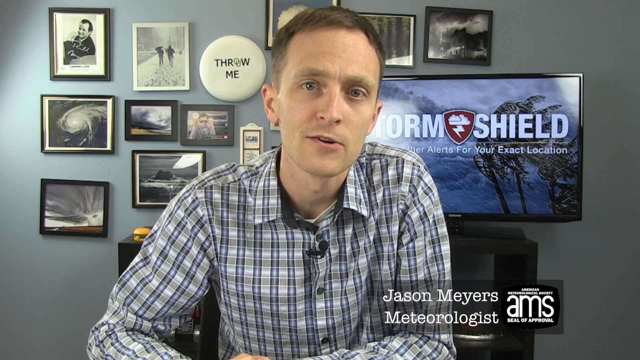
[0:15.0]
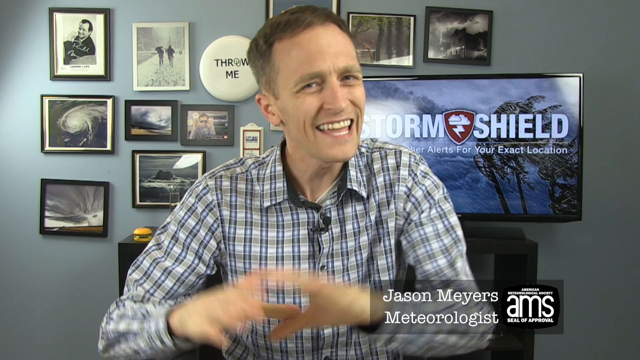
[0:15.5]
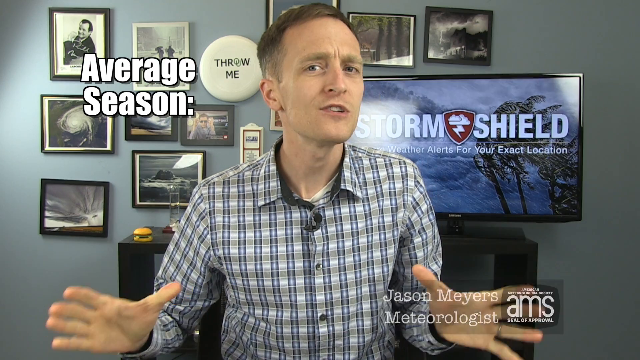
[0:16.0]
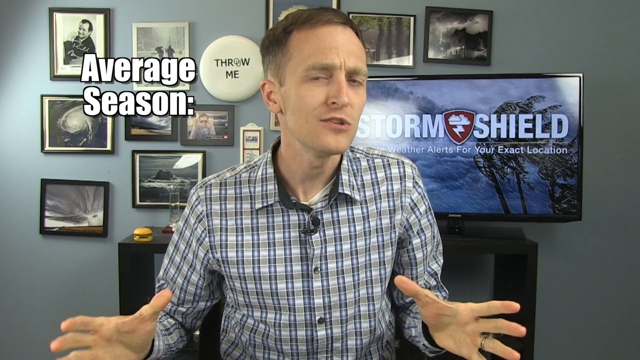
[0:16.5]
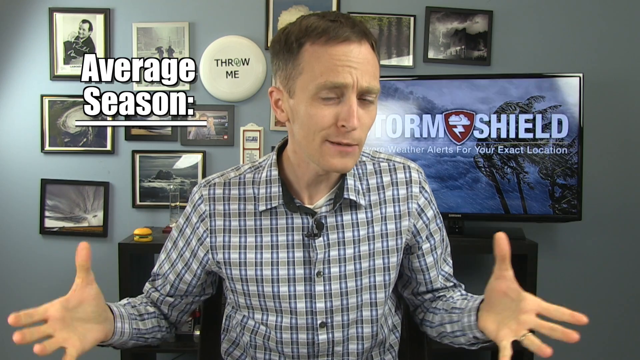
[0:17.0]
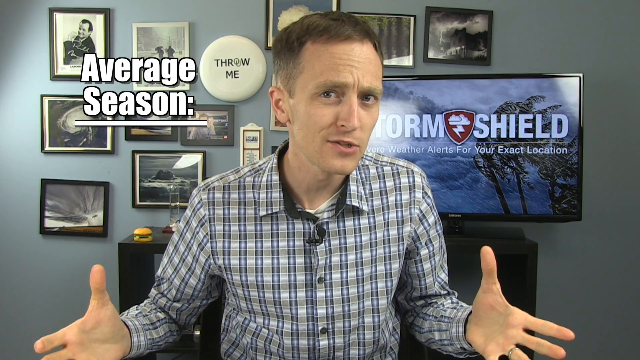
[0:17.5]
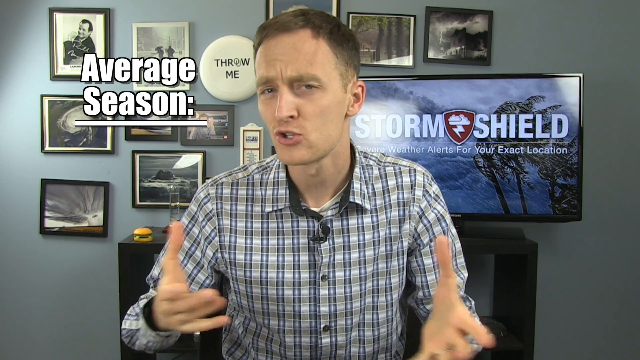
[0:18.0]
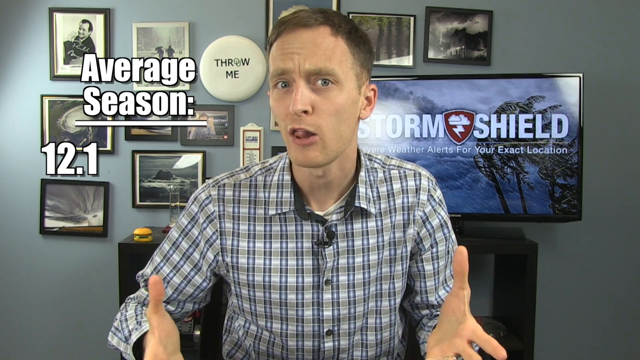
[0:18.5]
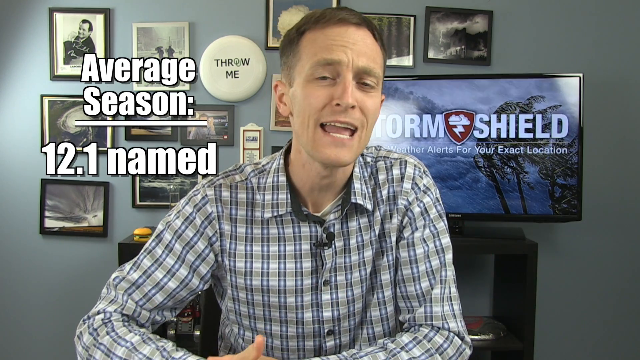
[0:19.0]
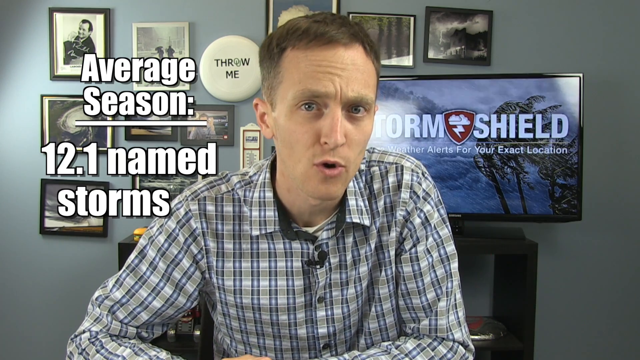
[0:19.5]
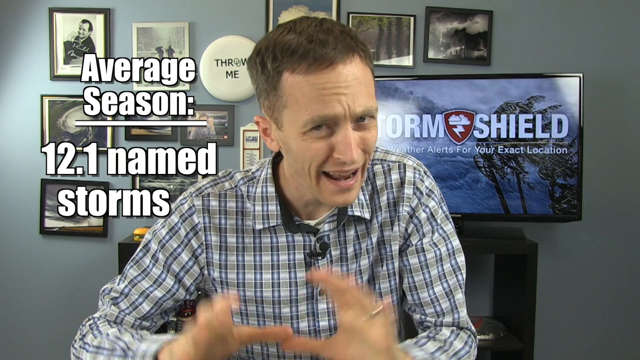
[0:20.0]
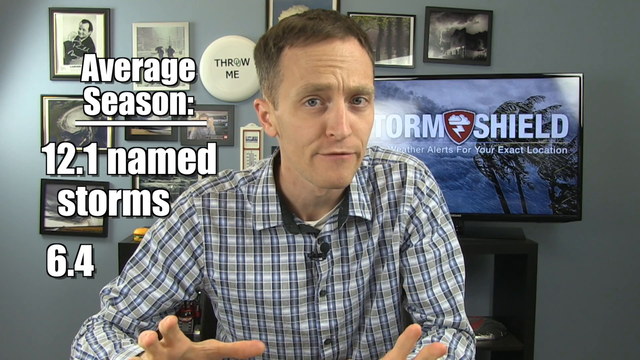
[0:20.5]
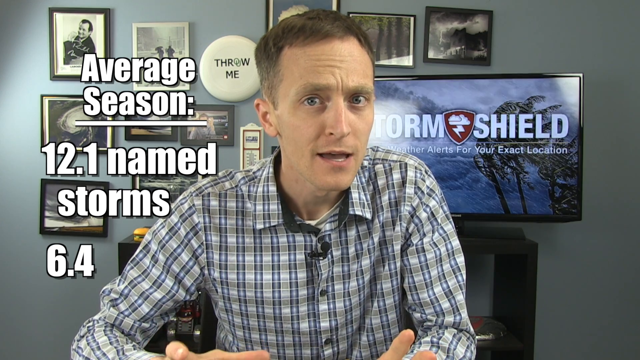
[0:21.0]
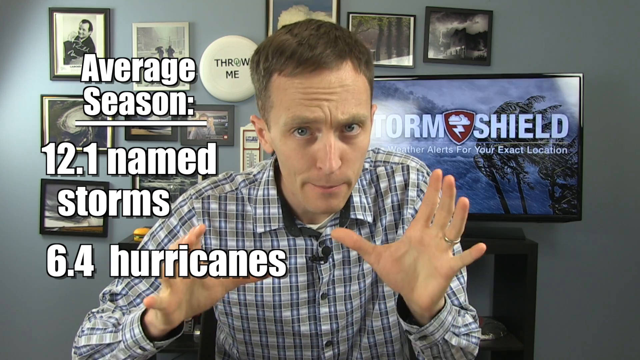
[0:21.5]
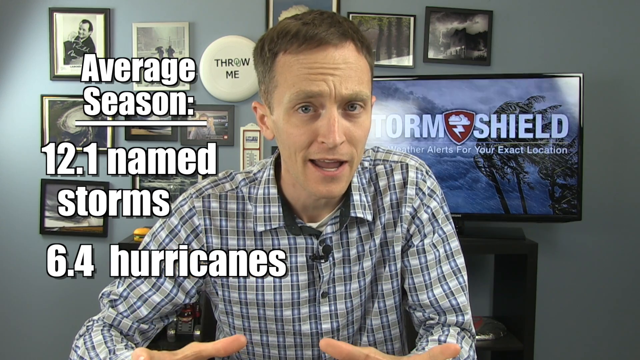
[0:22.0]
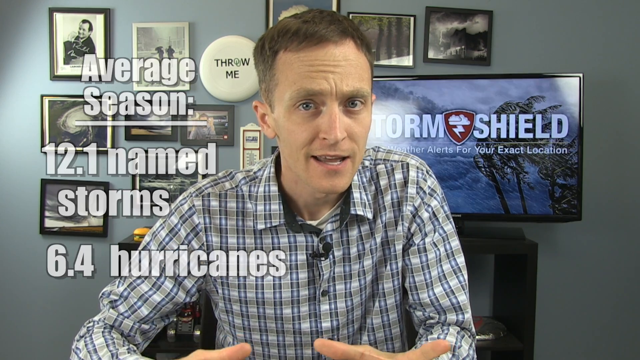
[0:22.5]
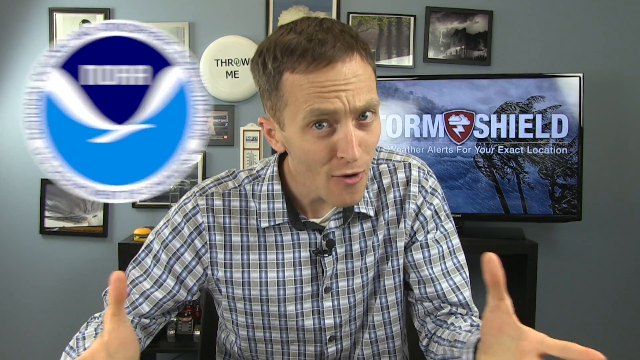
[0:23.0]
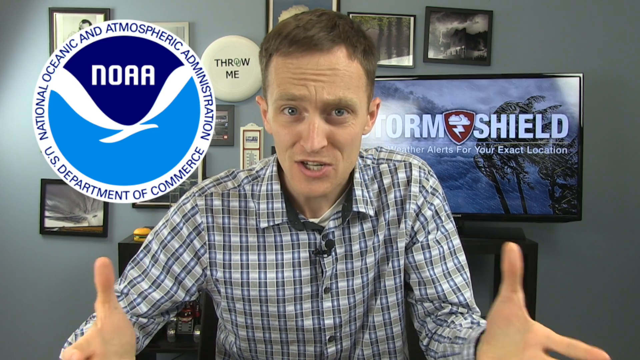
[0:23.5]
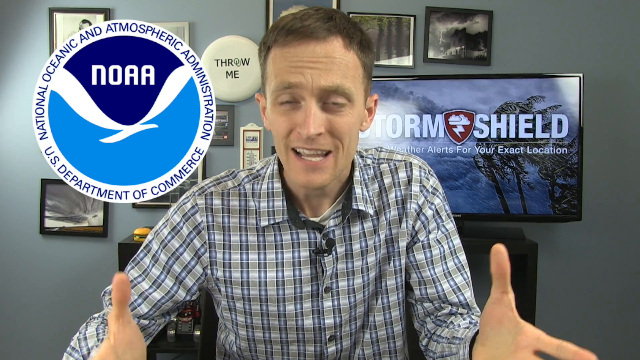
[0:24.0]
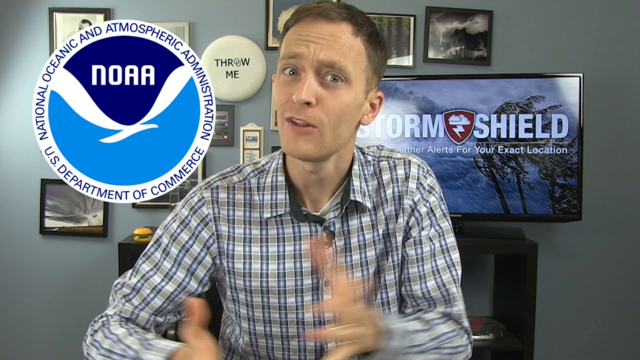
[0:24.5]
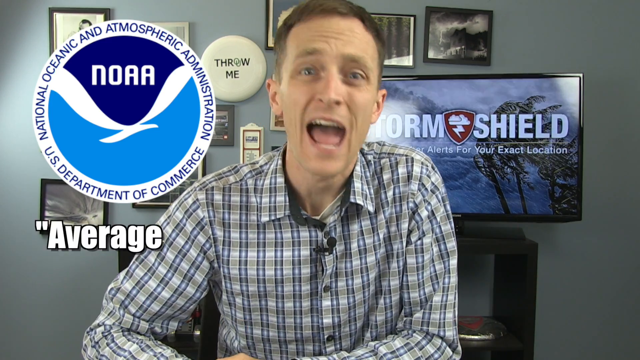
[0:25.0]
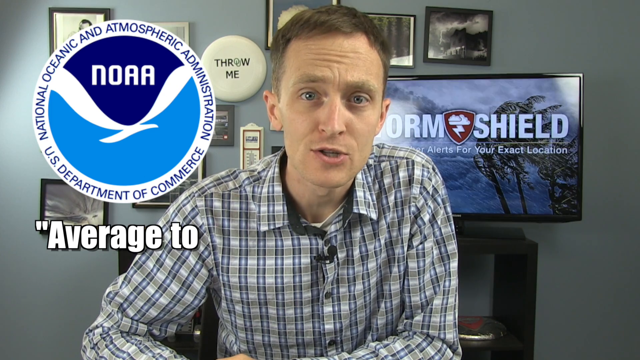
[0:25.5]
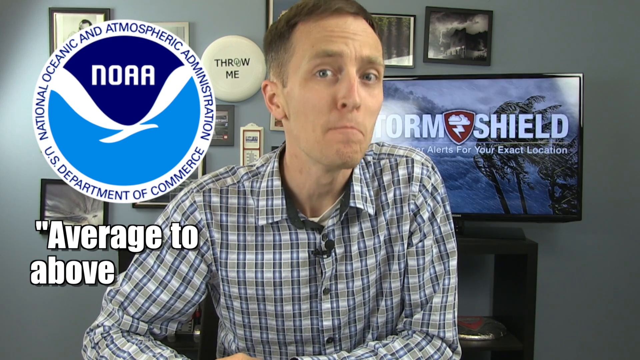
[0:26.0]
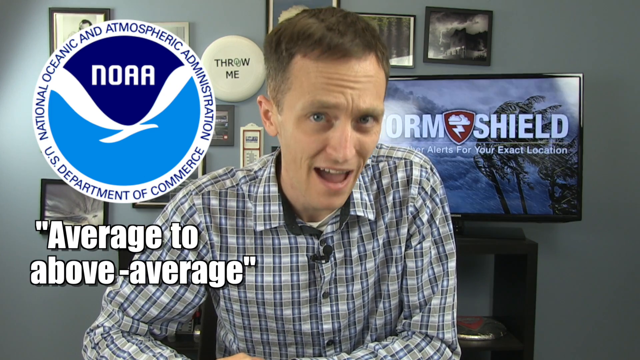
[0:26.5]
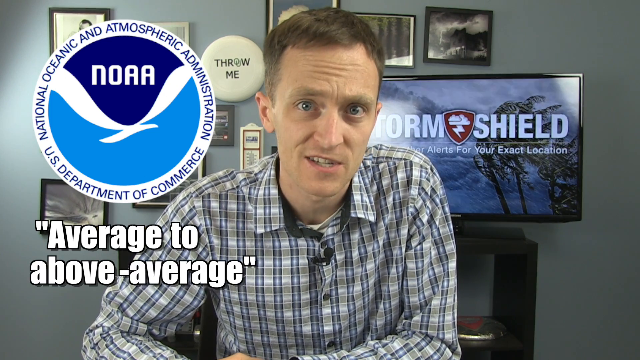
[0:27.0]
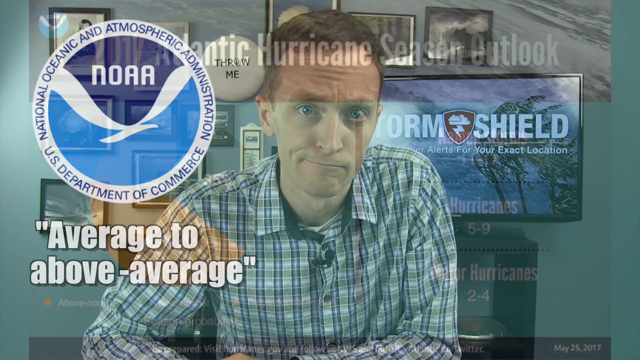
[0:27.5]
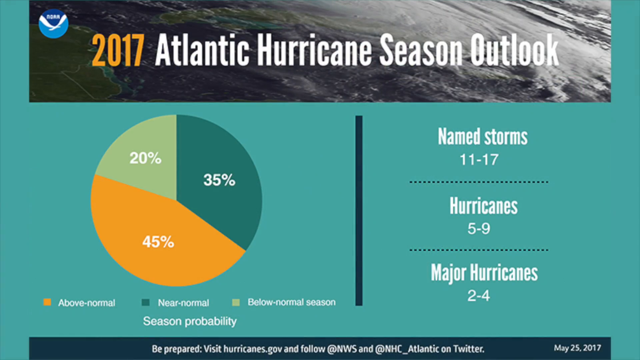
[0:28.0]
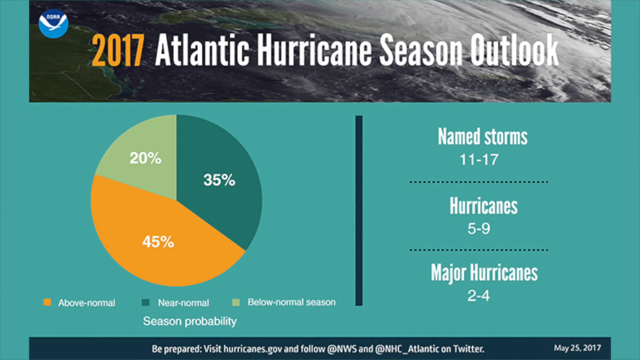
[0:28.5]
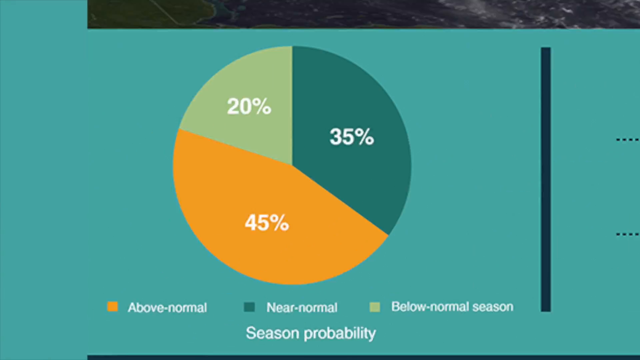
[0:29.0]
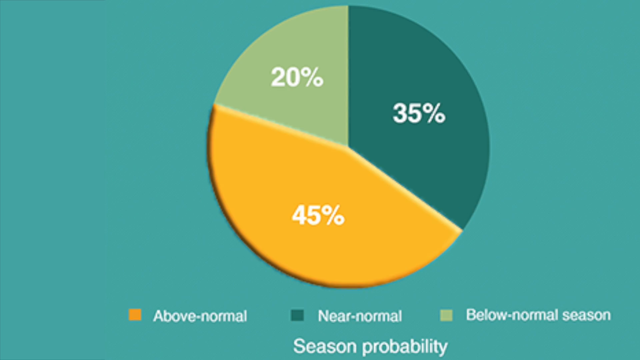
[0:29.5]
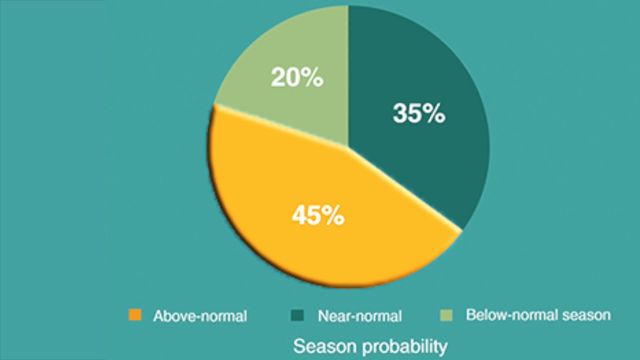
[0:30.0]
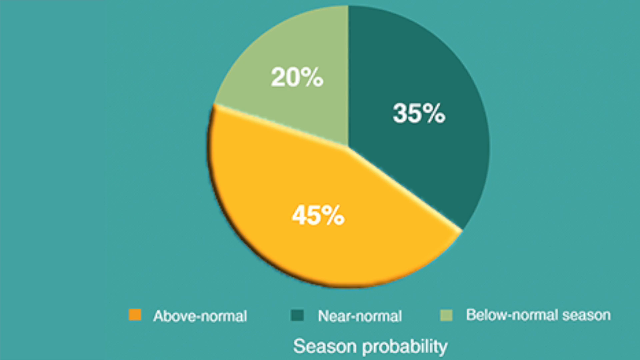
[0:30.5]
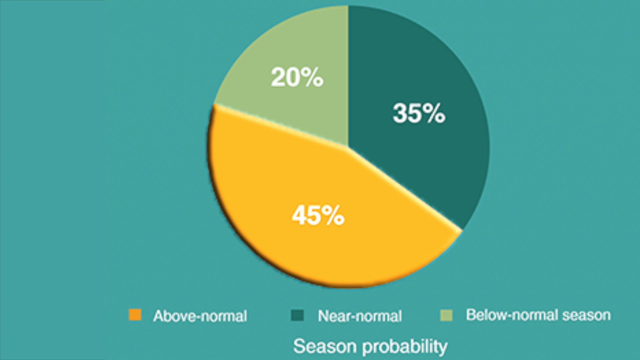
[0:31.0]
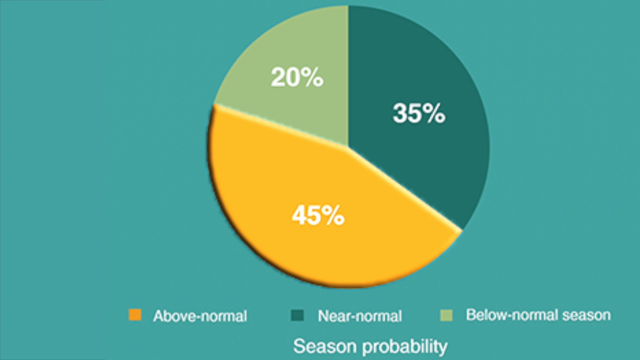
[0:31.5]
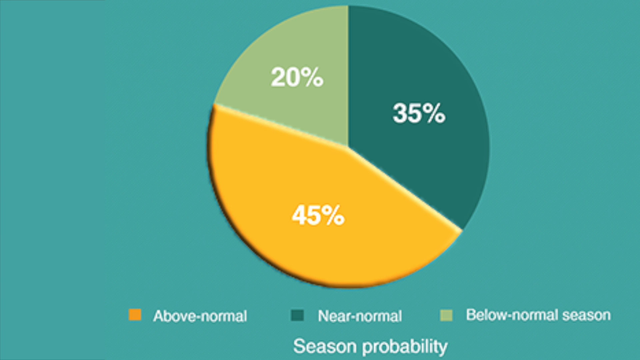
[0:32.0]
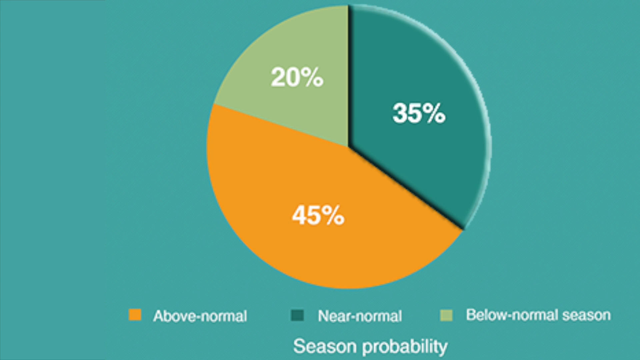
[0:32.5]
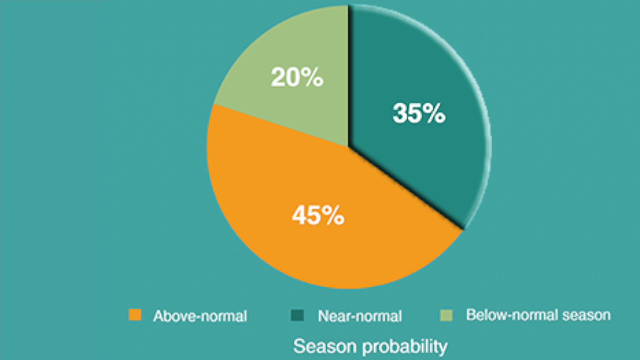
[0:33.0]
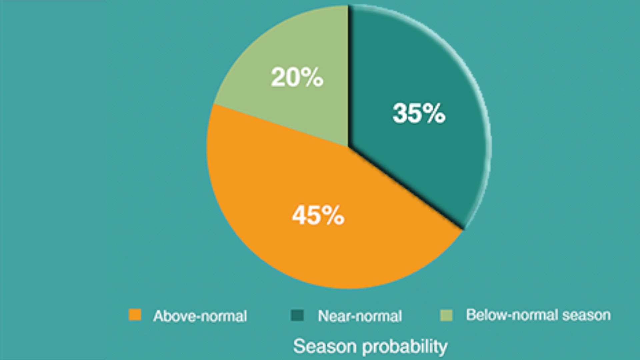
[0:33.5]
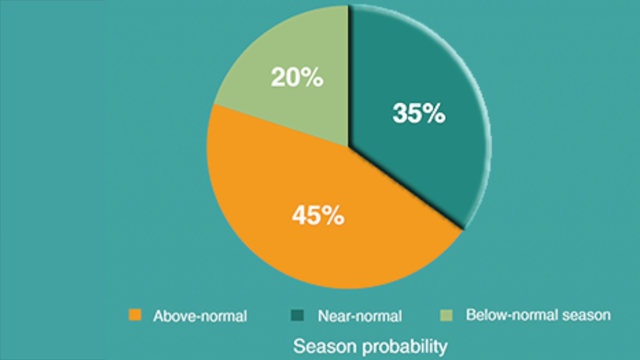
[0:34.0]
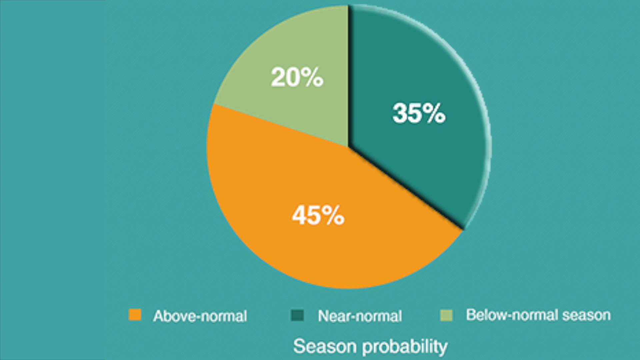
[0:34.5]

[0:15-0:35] Meteorologist Jason Myers appears with information on the 2017 Atlantic hurricane forecast: "Average season," "12.1 named storms," "6.4 hurricanes." A National Oceanic and Atmospheric Administration forecast graphic shows above normal at 45%, near normal at 35, and below normal at 20% in a pie chart. Jason Myers speaks animatedly. On the right side of the graphic are named storms, hurricanes and major hurricanes, with the numbers named storms 11-17, hurricanes 5-9, and major hurricanes 2-4. The banner at the top of the graphic reads "2017 Atlantic Hurricane Season Outlook."